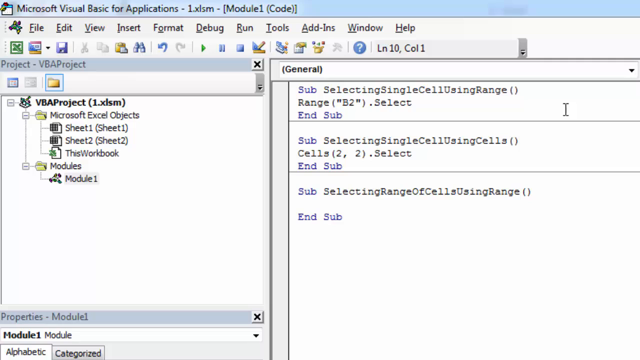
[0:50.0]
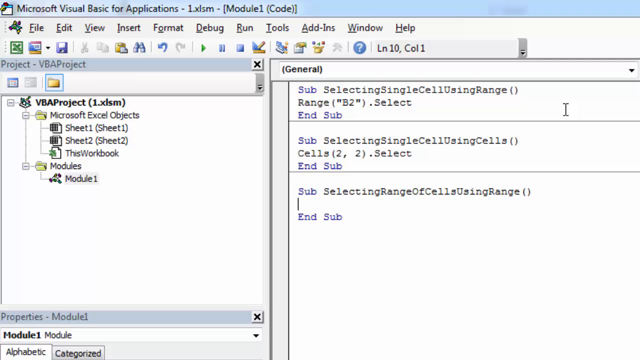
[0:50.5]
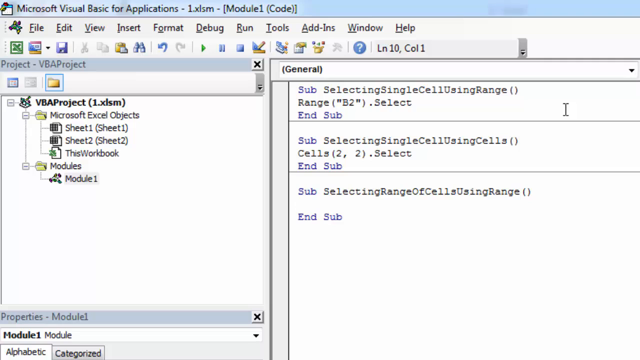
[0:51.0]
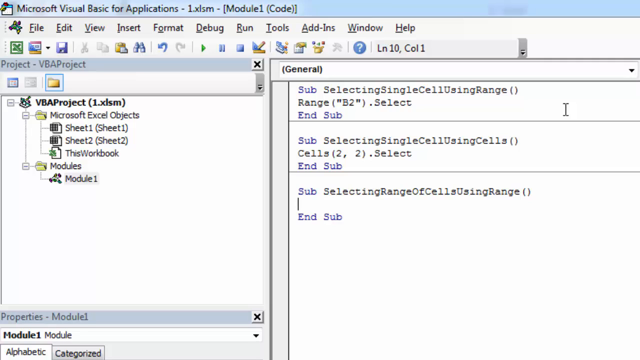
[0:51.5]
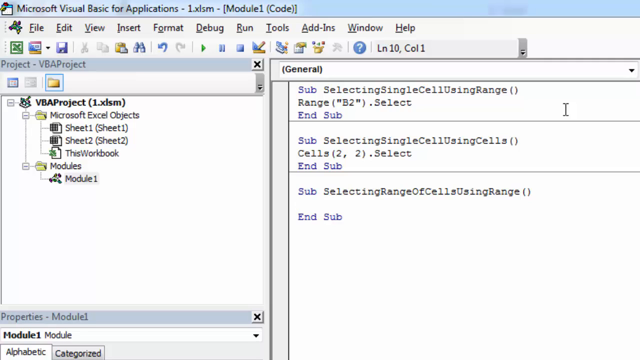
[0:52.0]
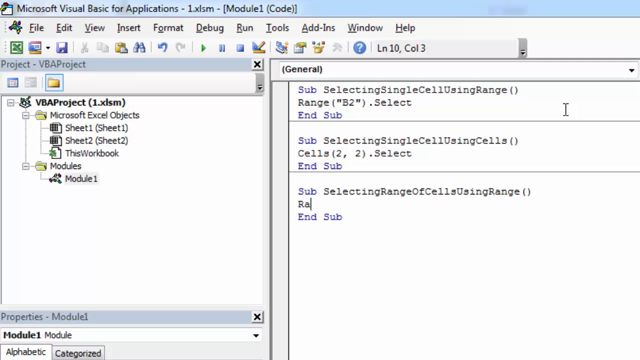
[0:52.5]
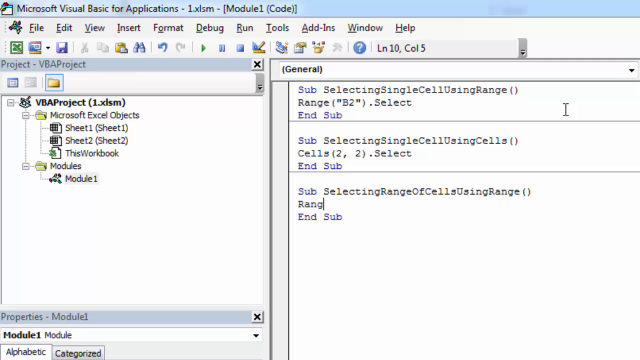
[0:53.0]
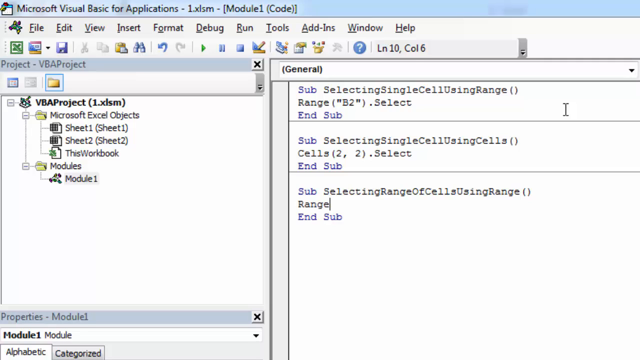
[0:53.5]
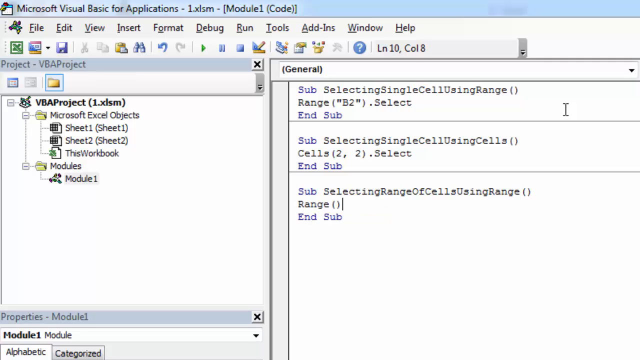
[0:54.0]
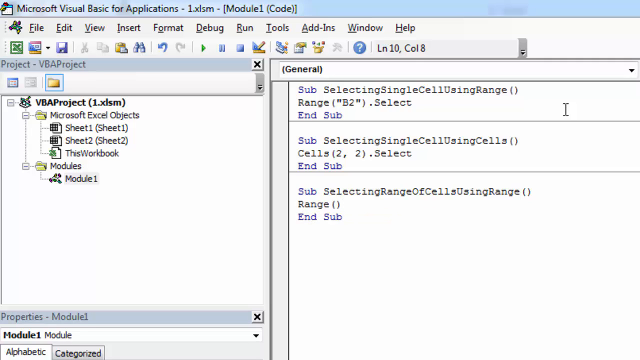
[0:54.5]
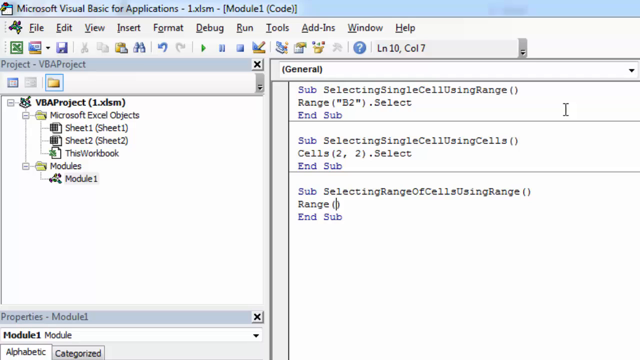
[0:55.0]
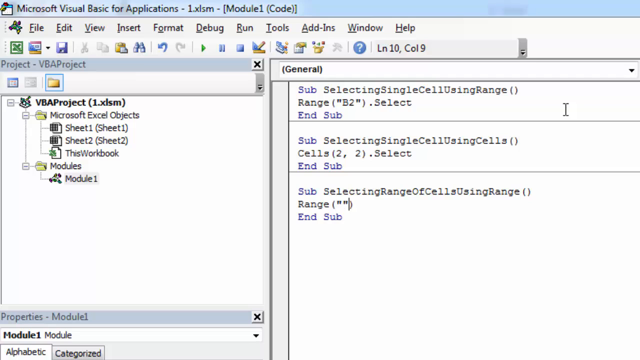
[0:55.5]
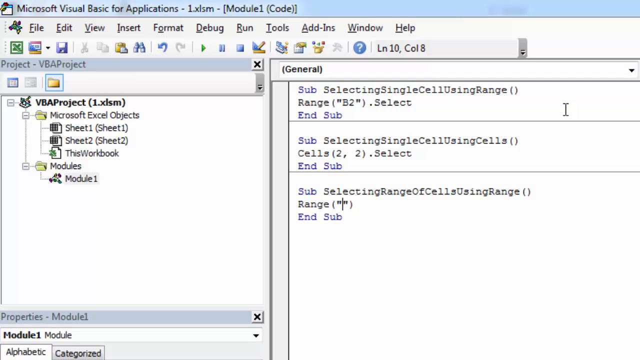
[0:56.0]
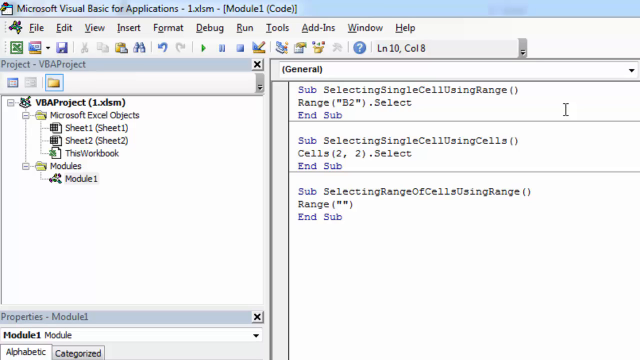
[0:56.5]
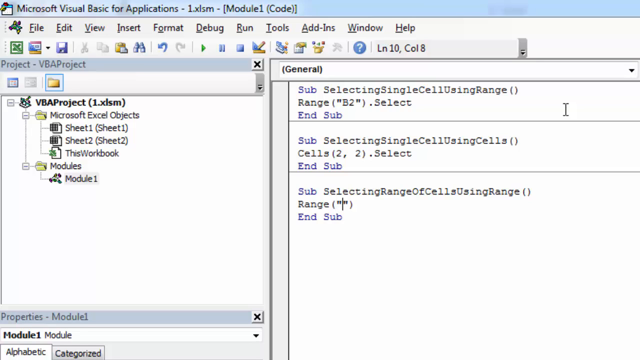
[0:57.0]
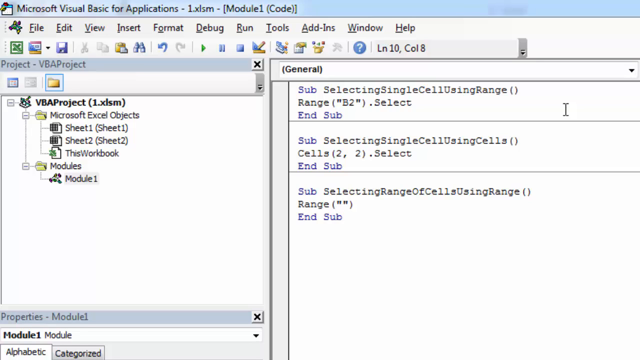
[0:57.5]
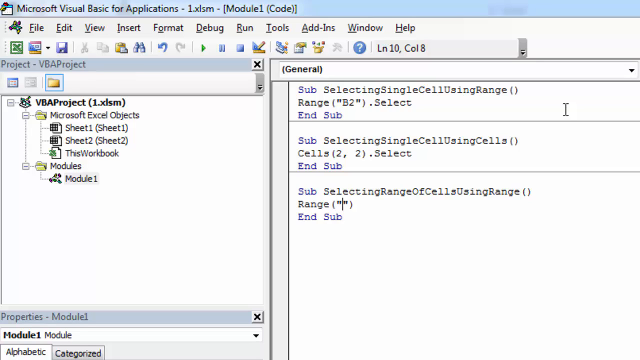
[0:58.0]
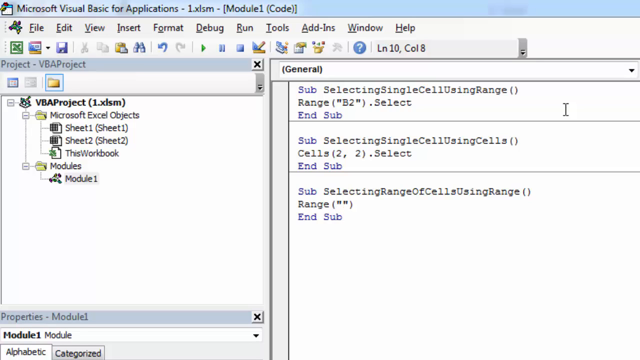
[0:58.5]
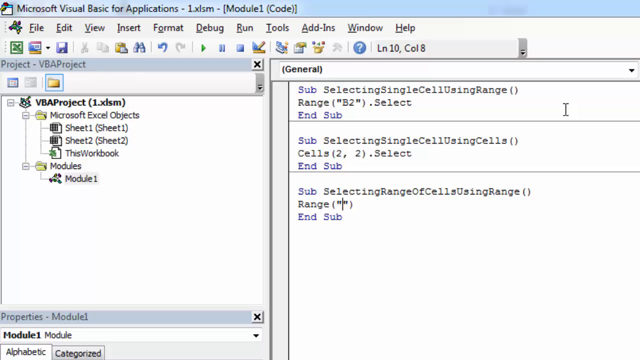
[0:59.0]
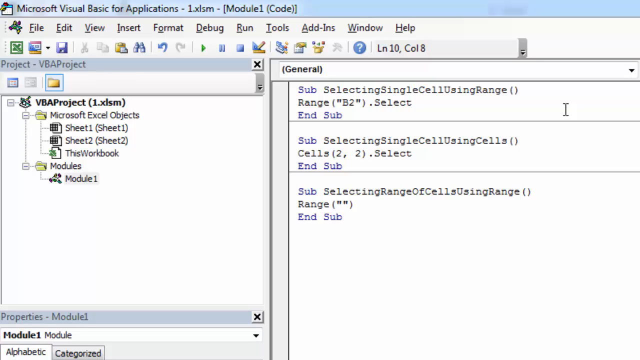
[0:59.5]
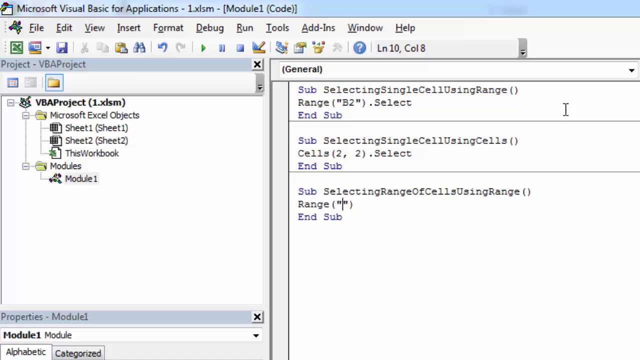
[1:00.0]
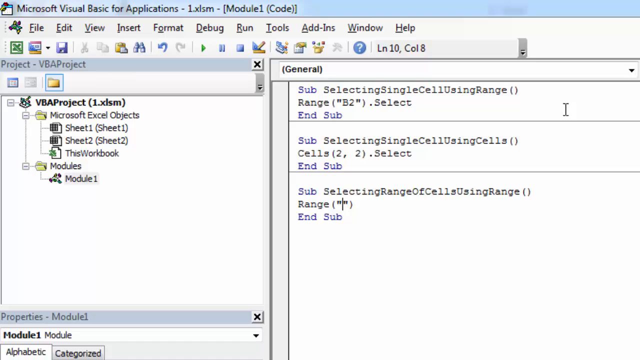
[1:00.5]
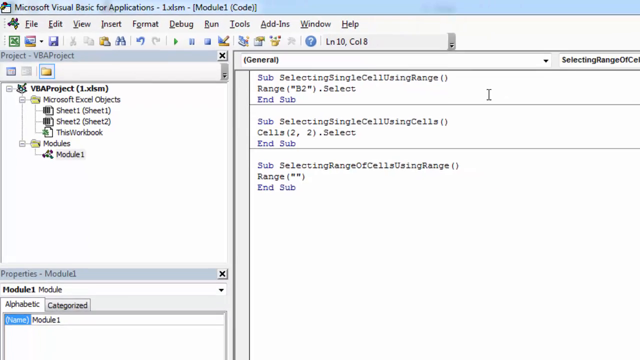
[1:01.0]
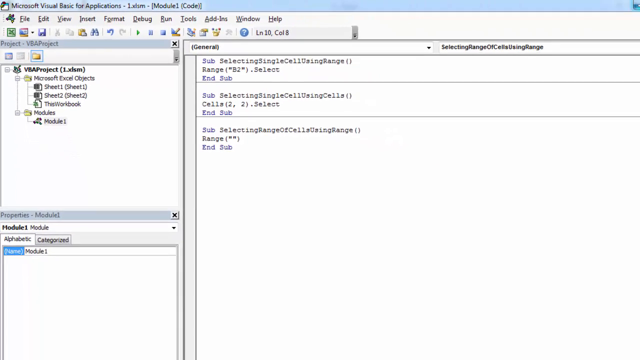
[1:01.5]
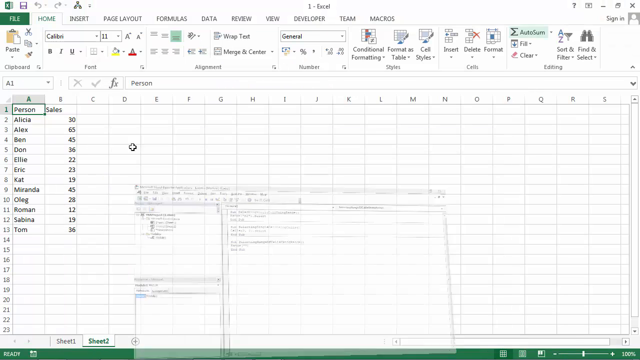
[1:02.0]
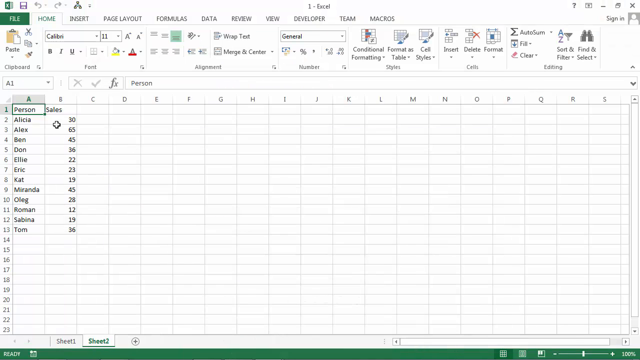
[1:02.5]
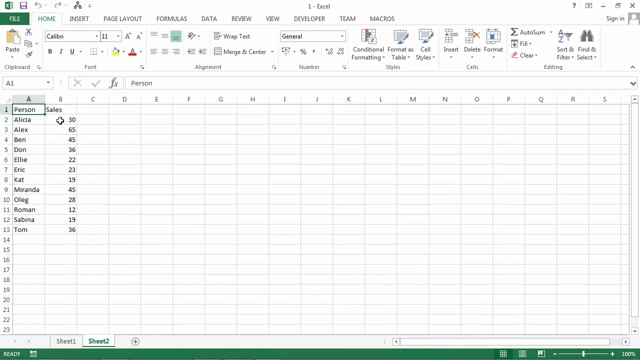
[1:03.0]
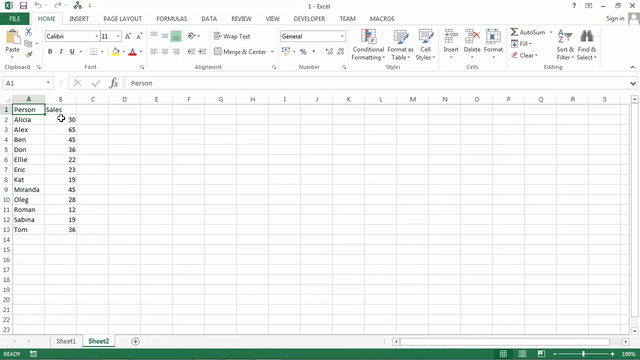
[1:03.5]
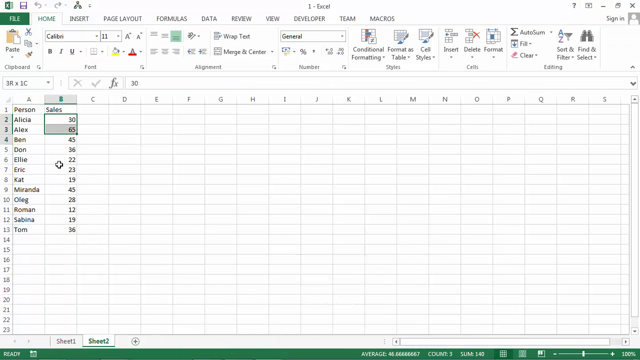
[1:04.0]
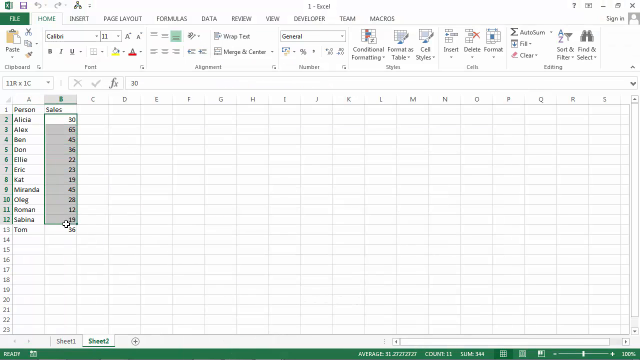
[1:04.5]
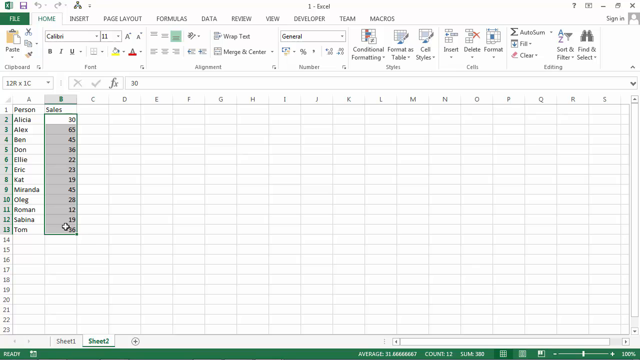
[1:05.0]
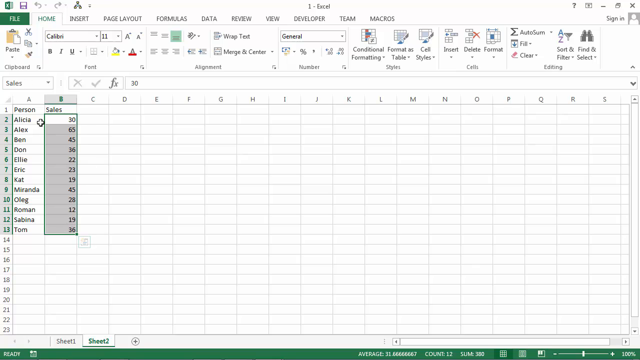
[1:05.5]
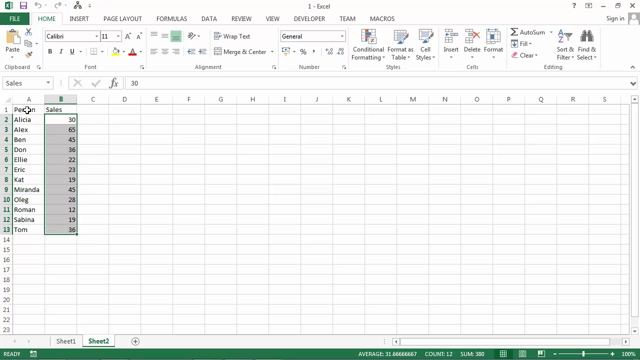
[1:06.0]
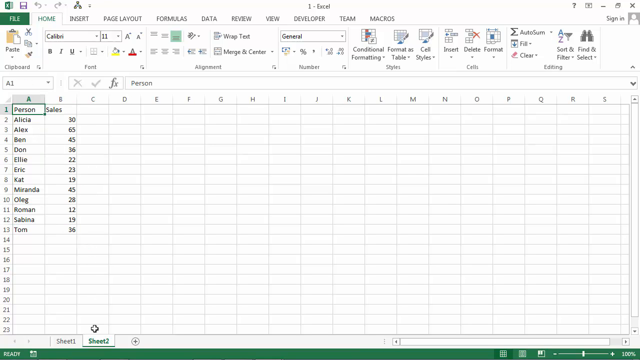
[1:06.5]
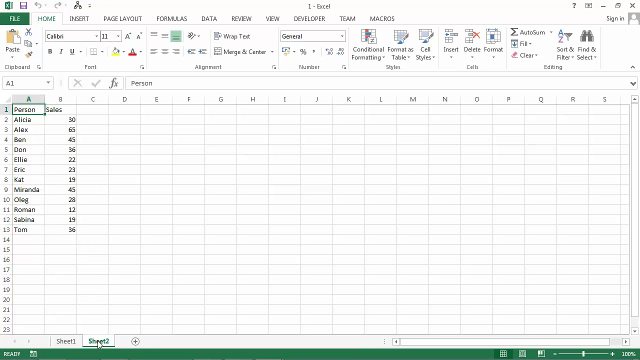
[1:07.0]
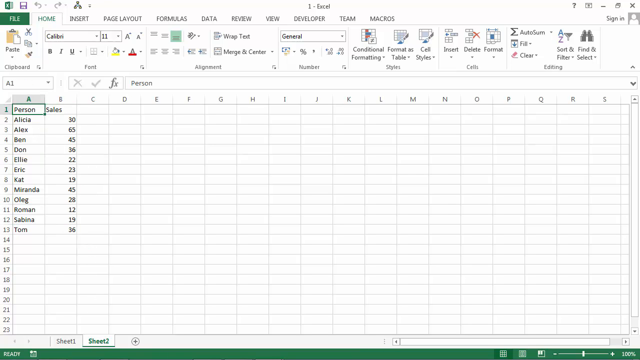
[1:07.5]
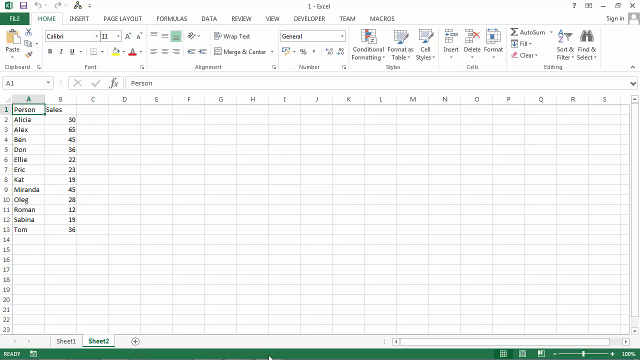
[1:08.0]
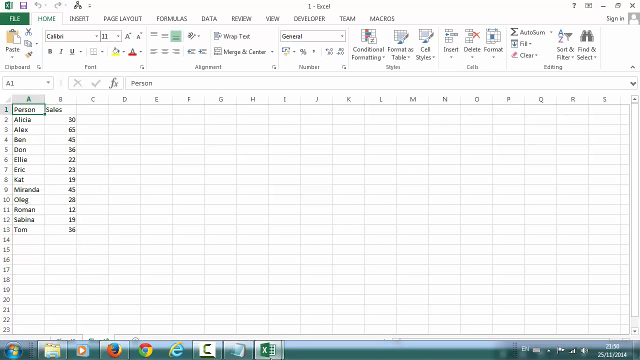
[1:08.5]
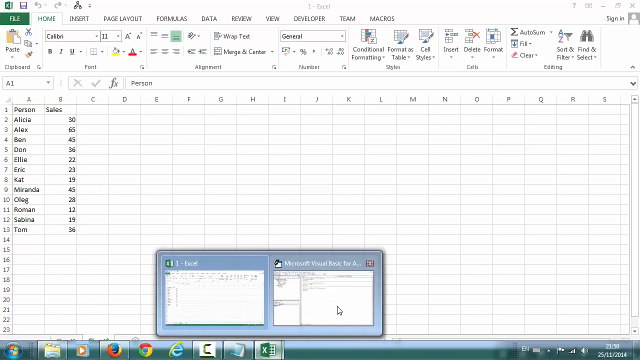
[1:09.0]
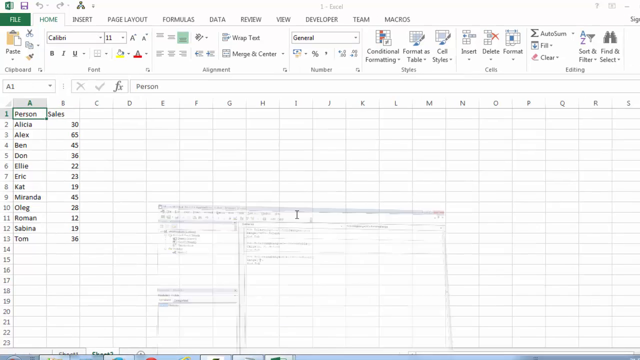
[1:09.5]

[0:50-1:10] In Microsoft Visual Basic for Applications, the view is zoomed in on the top left and right-hand panels, with the toolbars across the top of the application also visible. In the left-hand panel, under the option "Modules", Module 1 is selected and highlighted in grey. The right-hand panel contains three chunks of code. The first appears to instruct Excel to select single cells using an assigned range, the range being B2. The second also selects single cells, this time by specifying cells 2 and 2. The final chunk, just added, appears to instruct Excel to select a range of cells using a given range. The person types the word range and some code on the next line. After a pause of several seconds, the view zooms out from the two panels to show the full application. The user returns to the Excel document, where he once again highlights the sales data in cells B2 to B13, and then returns to having cell A1 highlighted. He then selects and reopens Microsoft Visual Basic for Applications to the same panels as before, while the camera zooms back in.